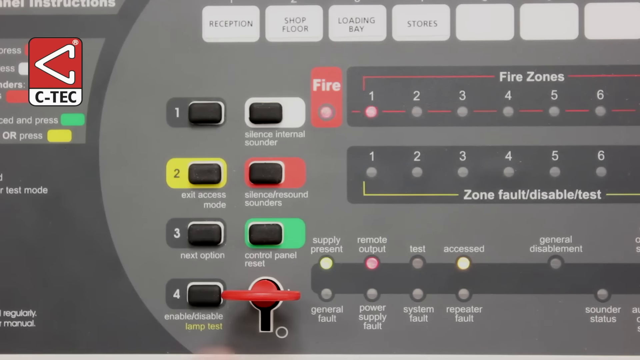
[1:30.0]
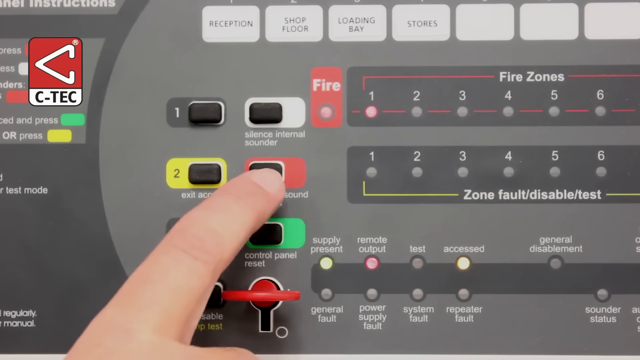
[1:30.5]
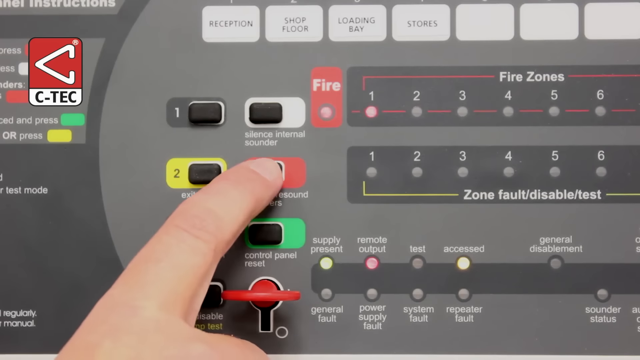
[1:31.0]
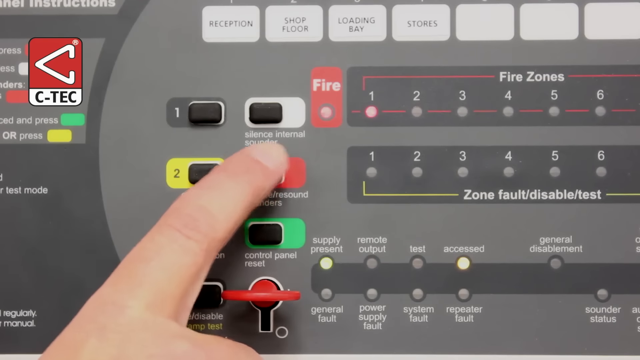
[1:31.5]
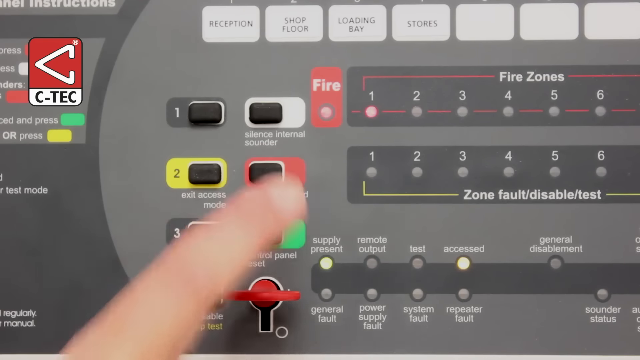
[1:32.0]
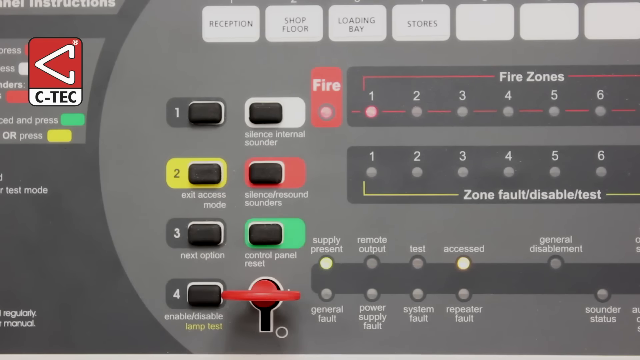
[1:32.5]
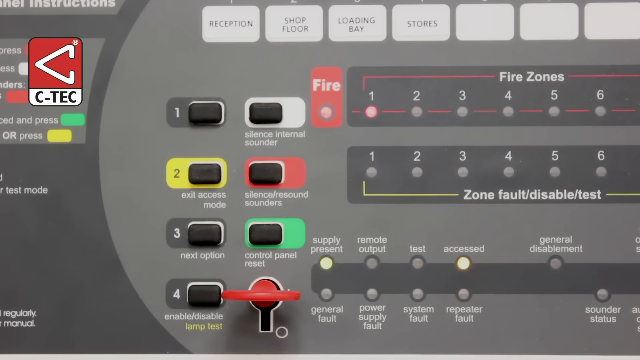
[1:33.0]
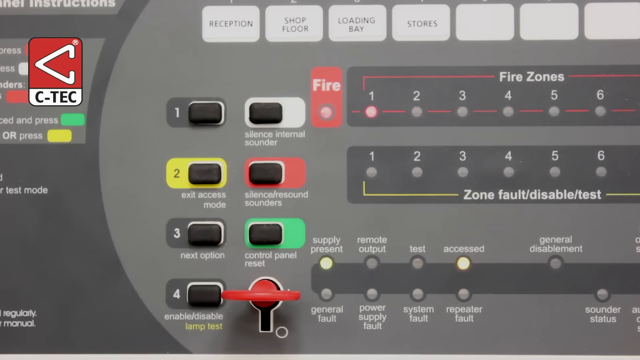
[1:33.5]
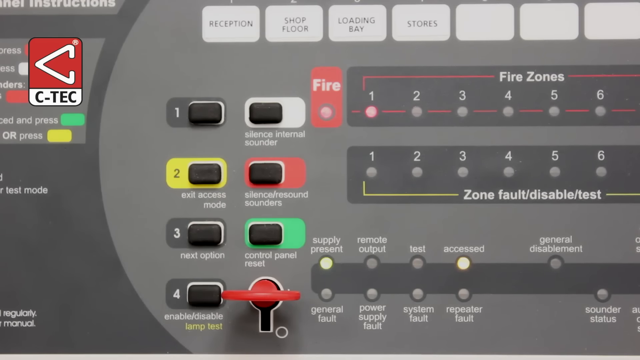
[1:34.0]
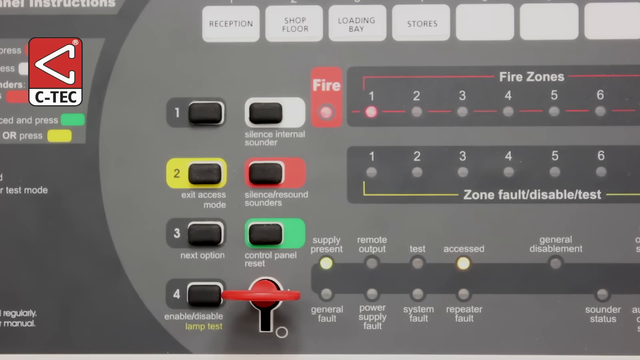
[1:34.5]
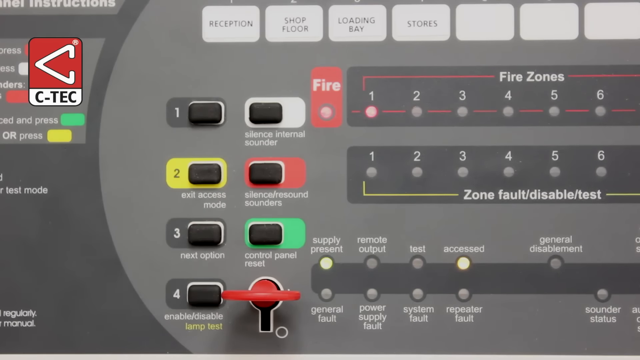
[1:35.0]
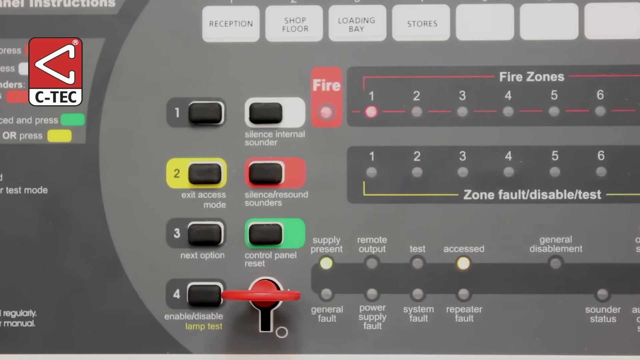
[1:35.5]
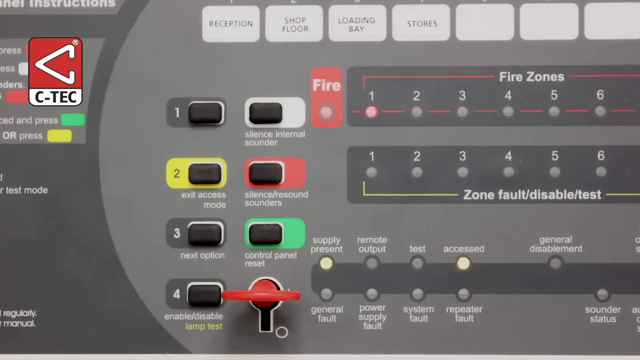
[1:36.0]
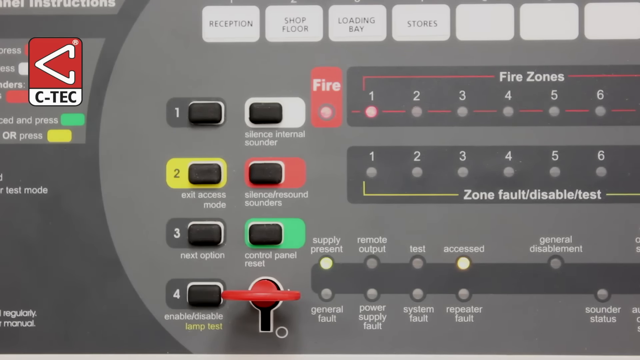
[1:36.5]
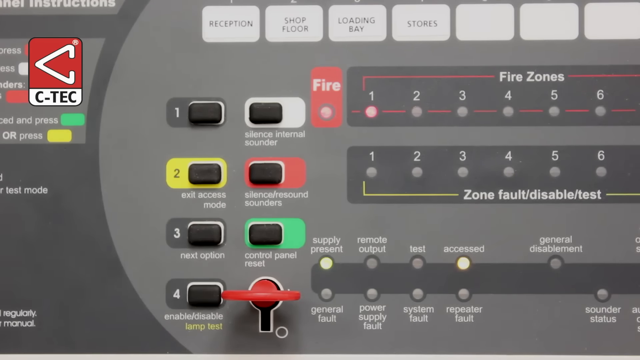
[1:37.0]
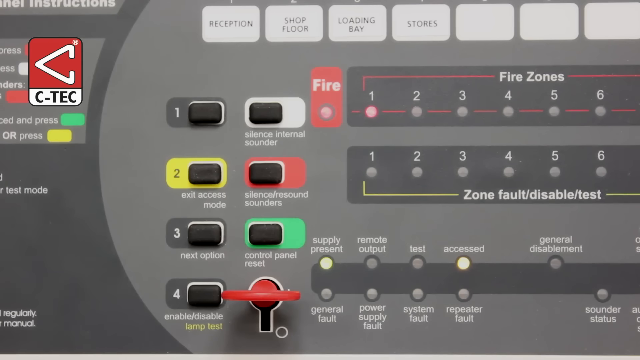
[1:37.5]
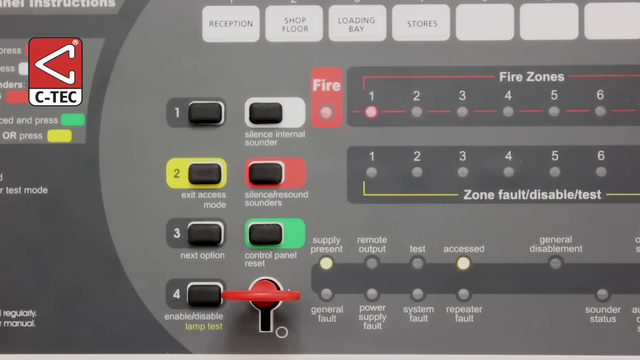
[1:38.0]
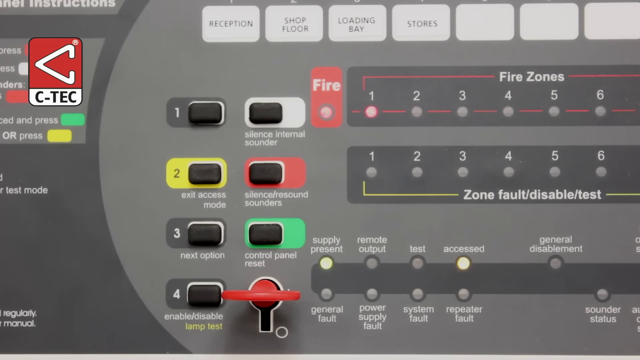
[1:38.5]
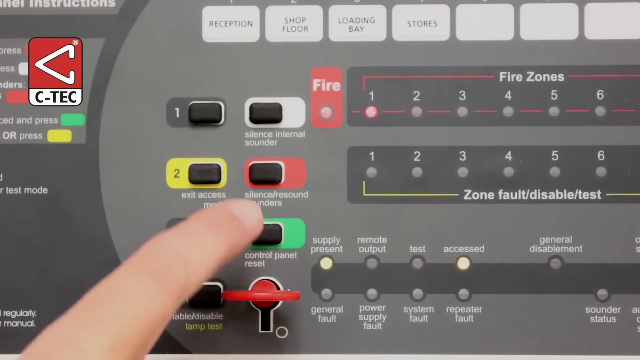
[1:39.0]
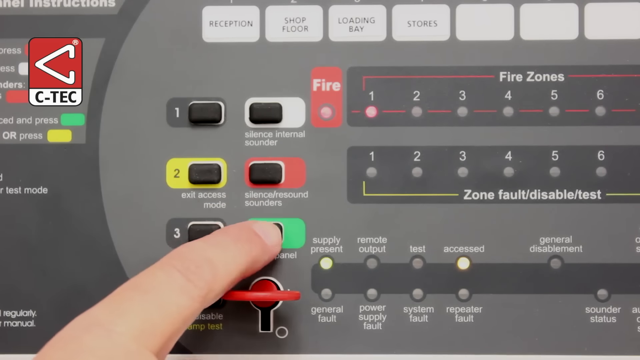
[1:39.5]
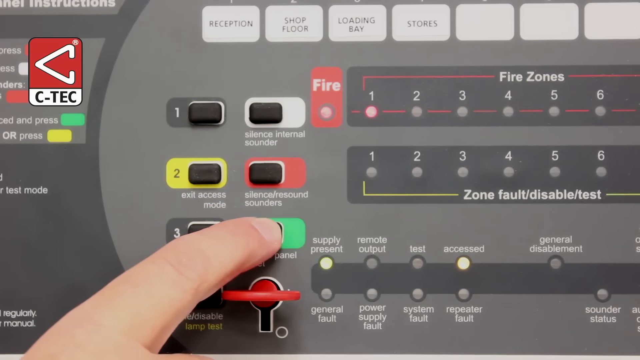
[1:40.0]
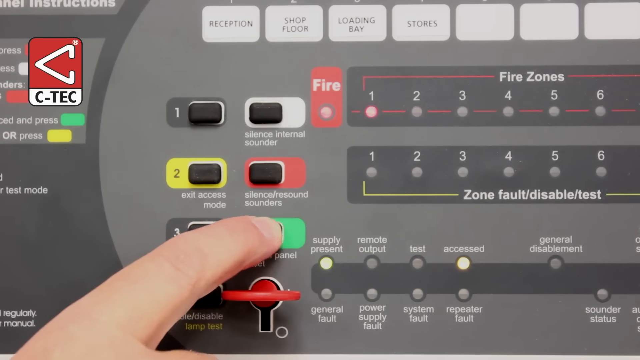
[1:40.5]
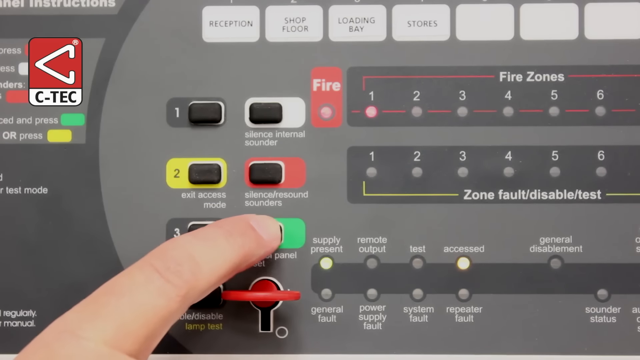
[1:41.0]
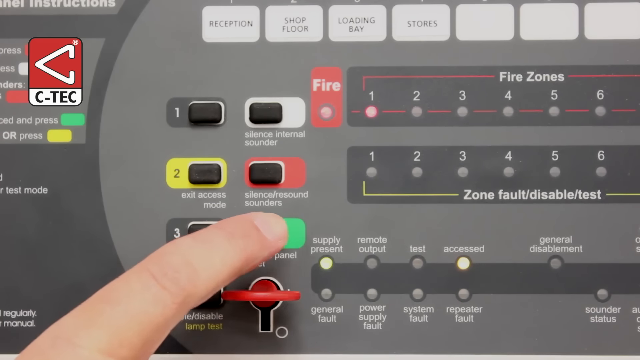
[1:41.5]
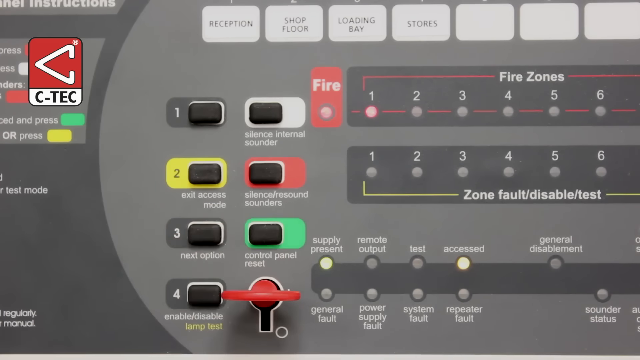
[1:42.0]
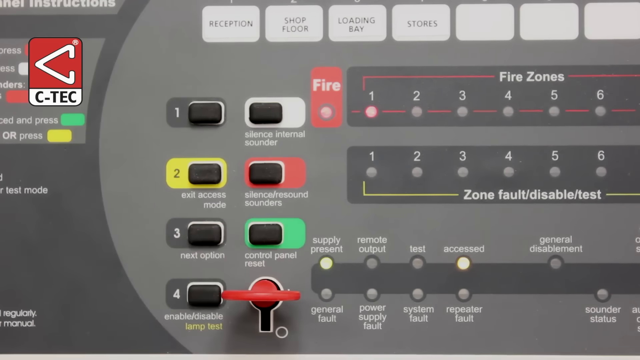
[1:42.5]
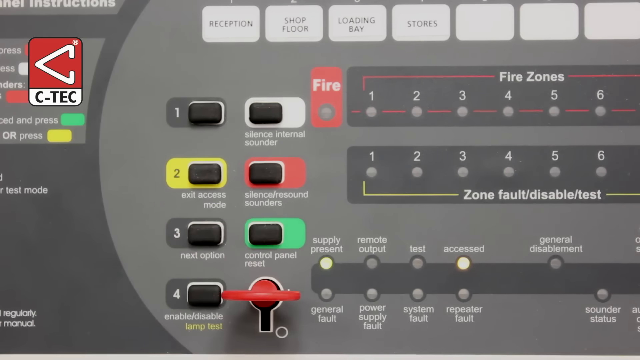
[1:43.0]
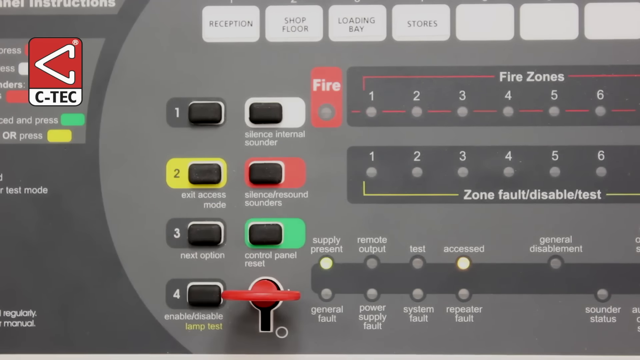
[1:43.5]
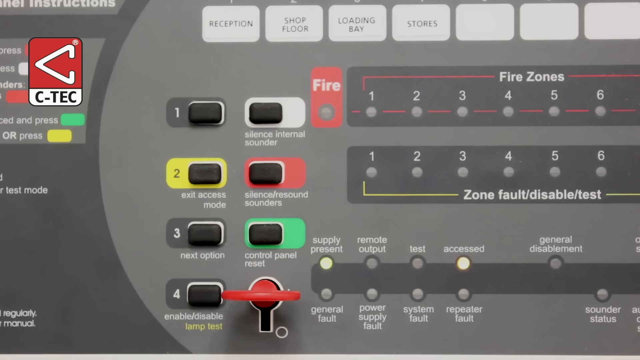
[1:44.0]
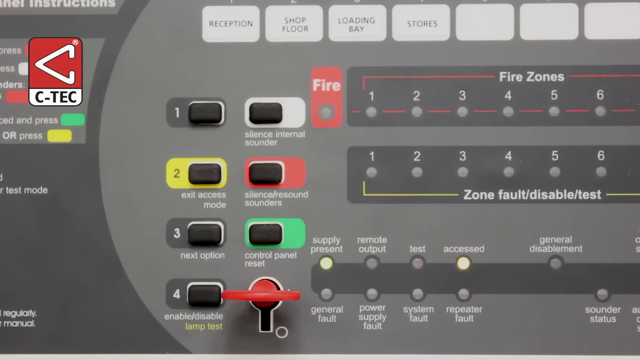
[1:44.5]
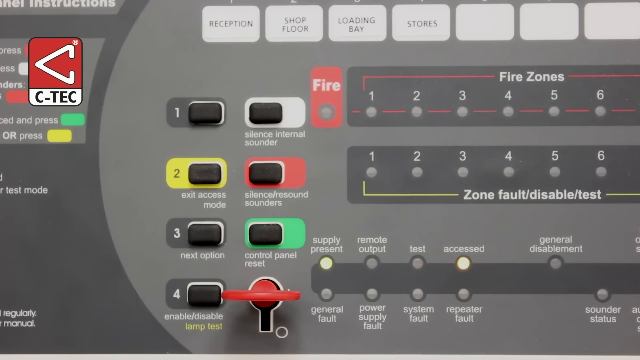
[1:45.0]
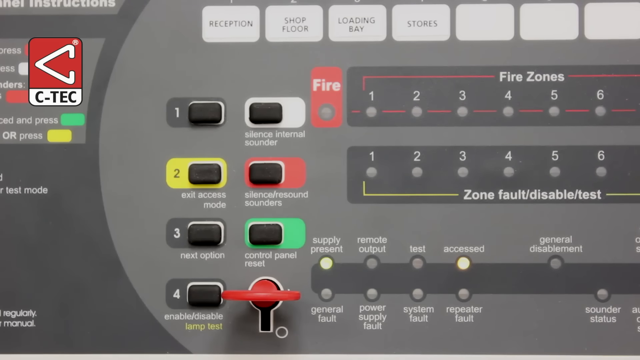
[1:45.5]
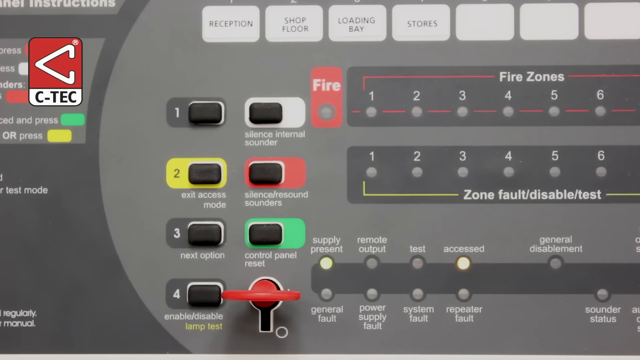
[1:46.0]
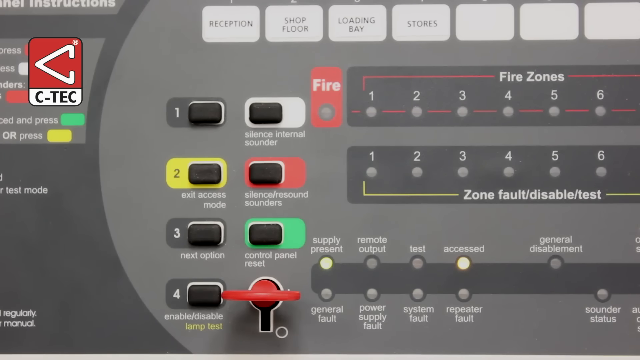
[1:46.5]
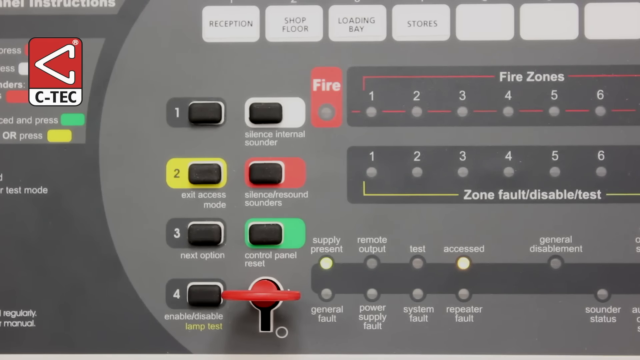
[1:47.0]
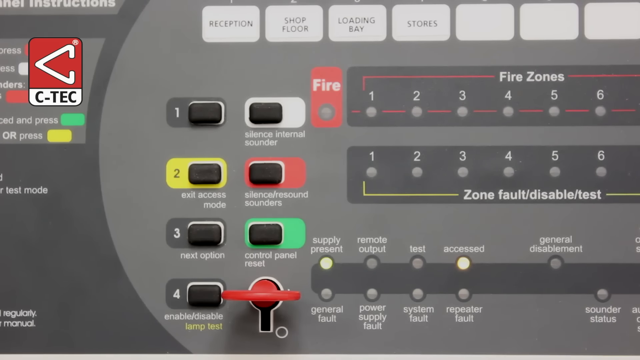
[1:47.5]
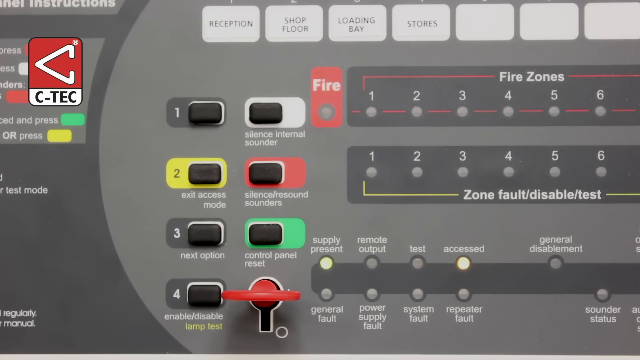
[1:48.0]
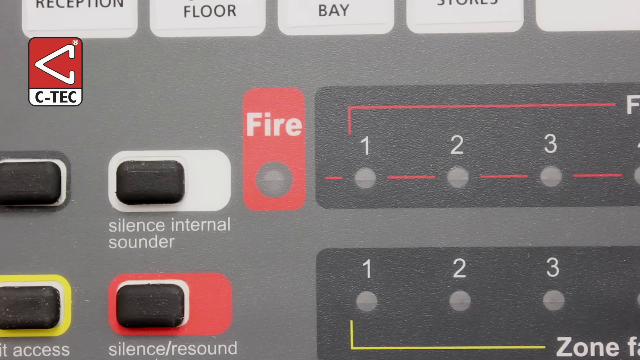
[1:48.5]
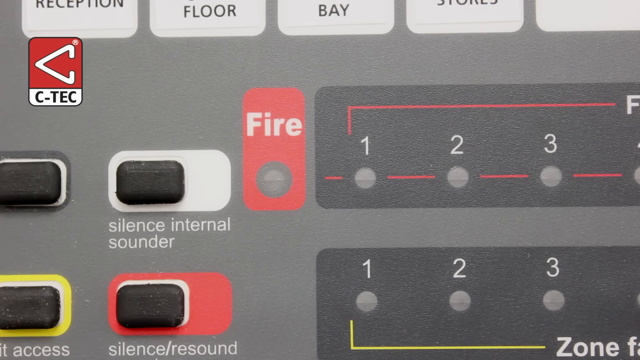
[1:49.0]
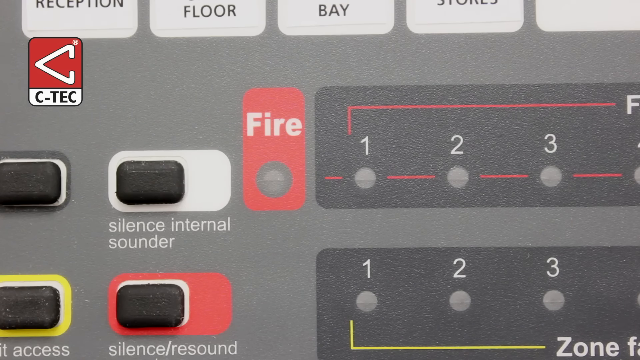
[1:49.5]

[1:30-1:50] The man clicks the Silence Resound Sounders button again, the second option on the right-hand side, which makes the remote output light go out and the fire zone's red lights stop flashing and stay a consistent colour. He then clicks the green Control Panel Reset option, which makes the red lights for fire zone one and the fire option at the top go out completely. The green and yellow lights at the bottom under Supply Present and Access remain lit. The camera zooms back into the option that says "Fire" to show that all of those lights have gone out. Next to the Fire option, which indicates a fire in one of the zones, there is an option to silence the internal sounder with a white background; the man does not click it.